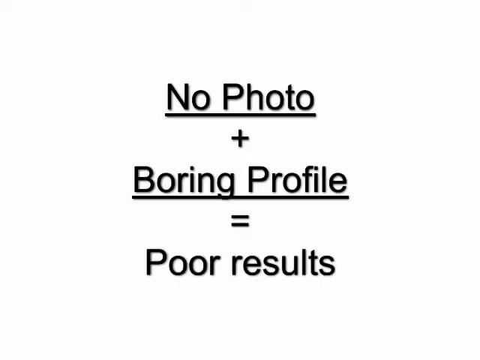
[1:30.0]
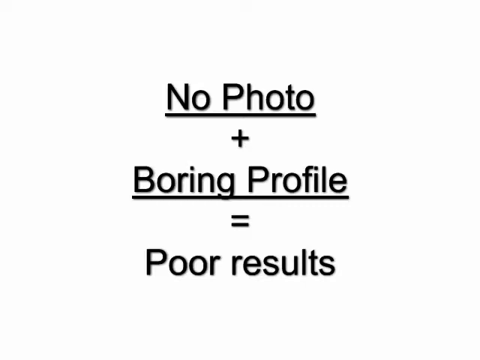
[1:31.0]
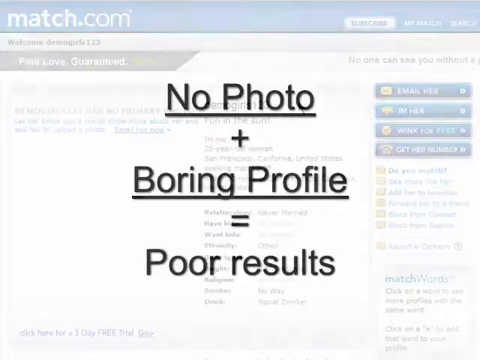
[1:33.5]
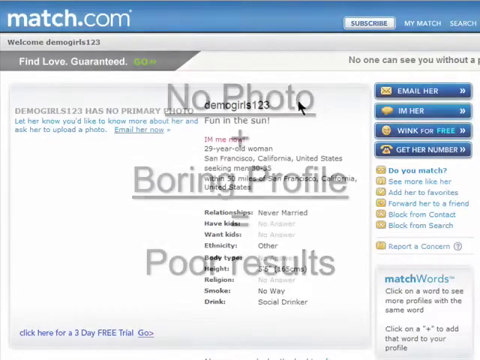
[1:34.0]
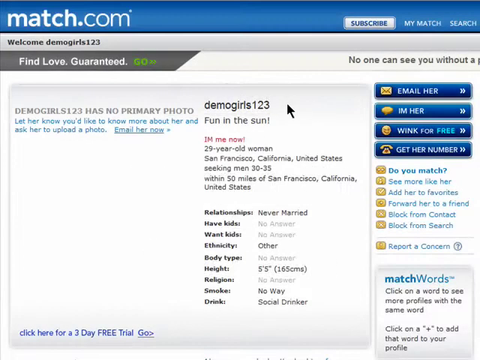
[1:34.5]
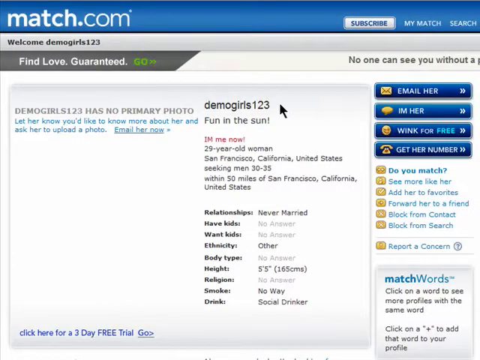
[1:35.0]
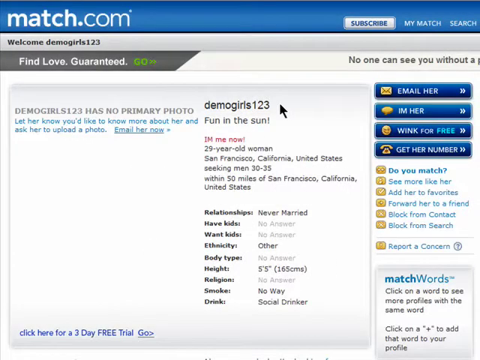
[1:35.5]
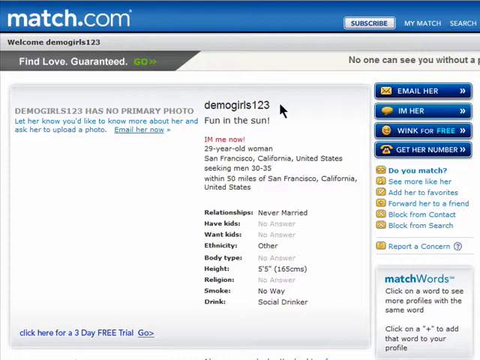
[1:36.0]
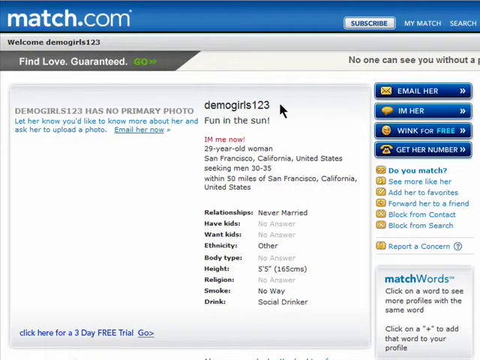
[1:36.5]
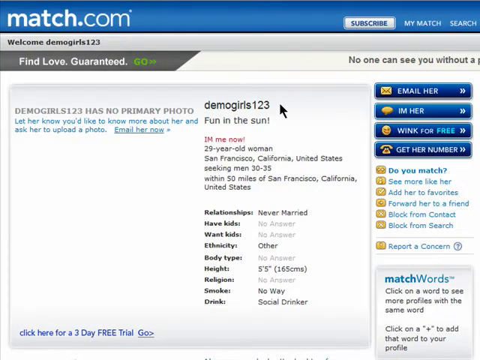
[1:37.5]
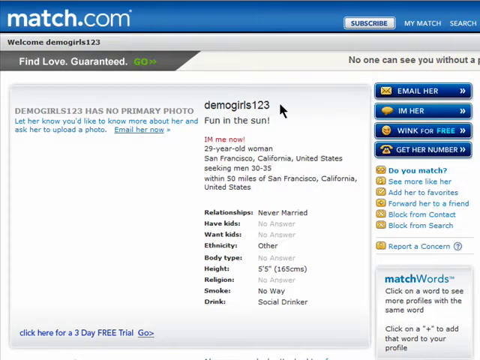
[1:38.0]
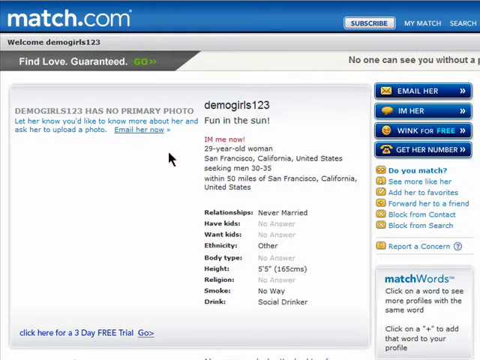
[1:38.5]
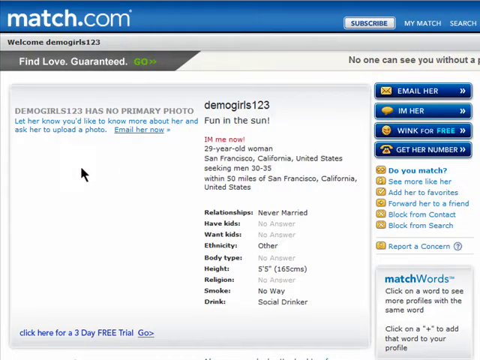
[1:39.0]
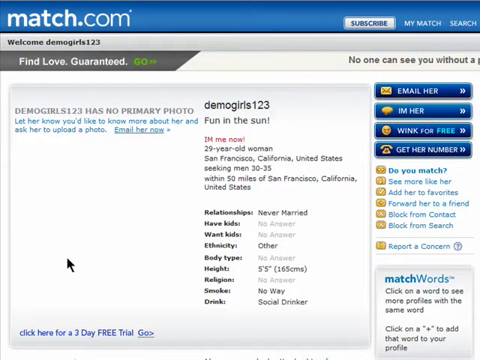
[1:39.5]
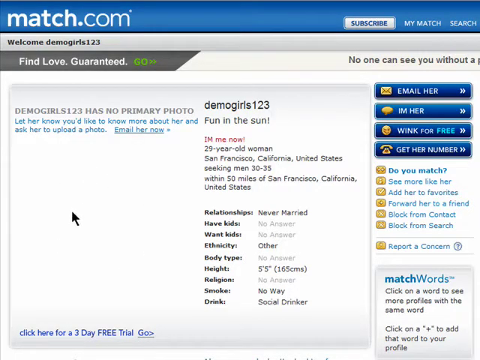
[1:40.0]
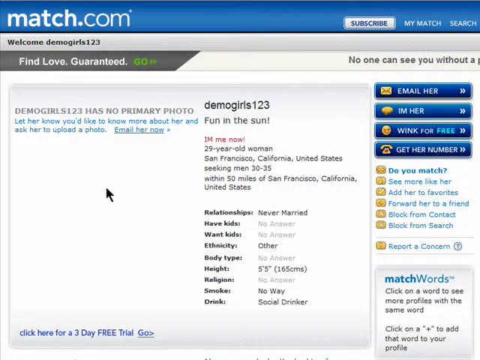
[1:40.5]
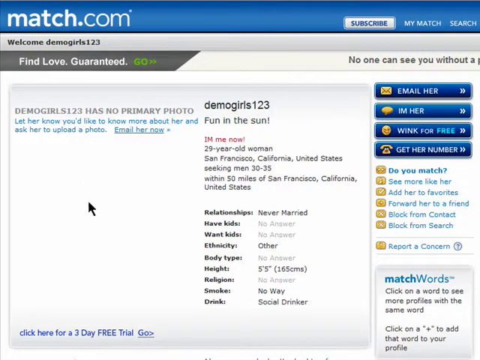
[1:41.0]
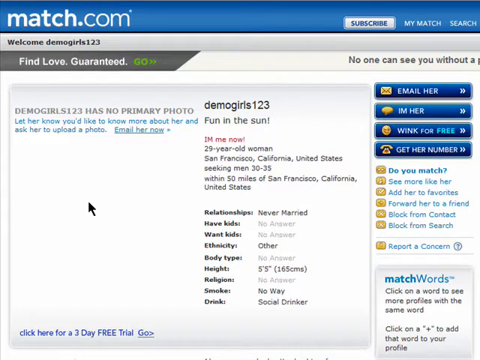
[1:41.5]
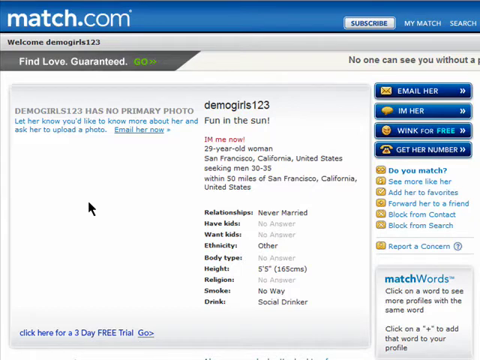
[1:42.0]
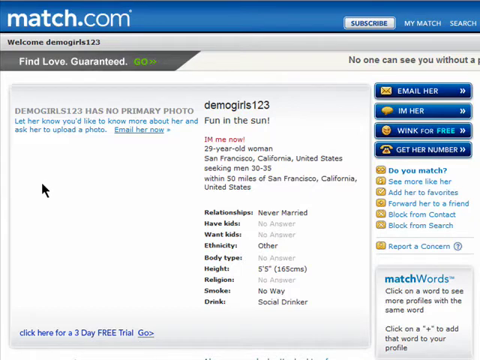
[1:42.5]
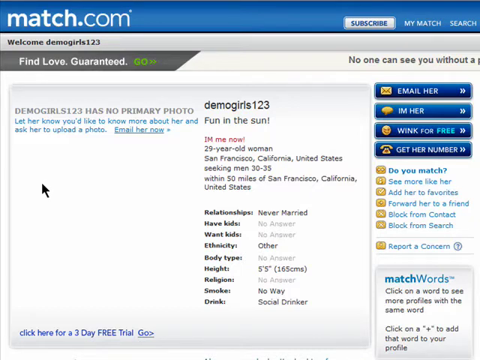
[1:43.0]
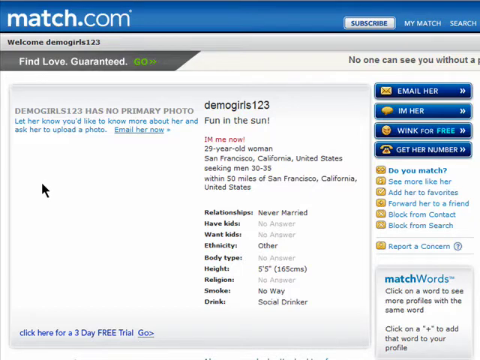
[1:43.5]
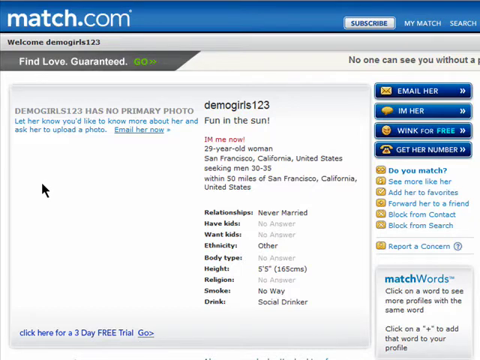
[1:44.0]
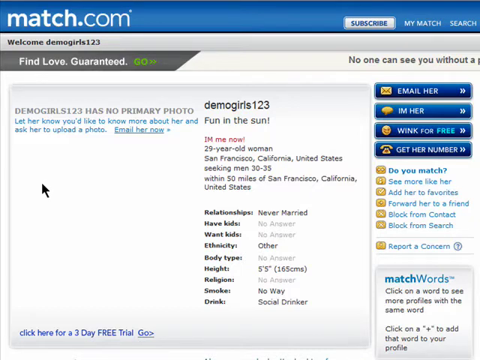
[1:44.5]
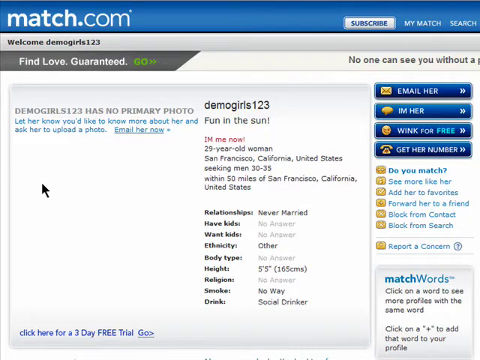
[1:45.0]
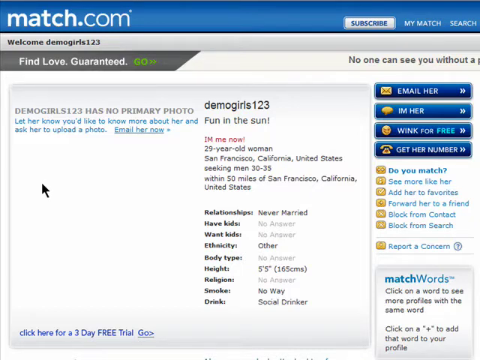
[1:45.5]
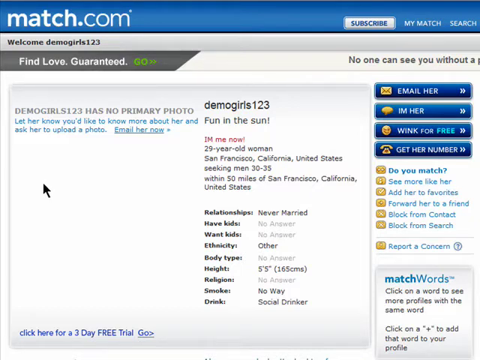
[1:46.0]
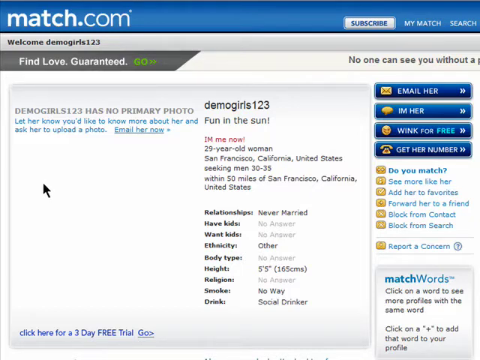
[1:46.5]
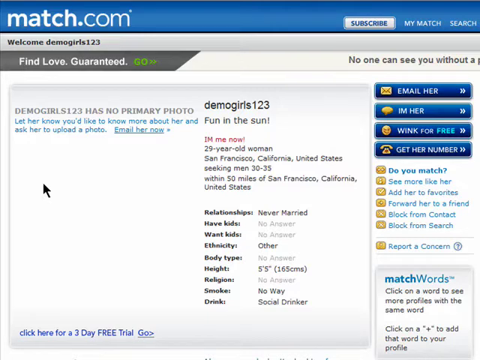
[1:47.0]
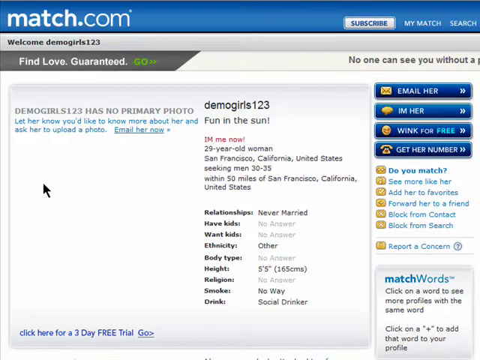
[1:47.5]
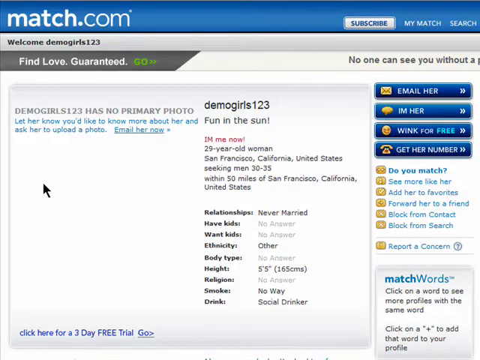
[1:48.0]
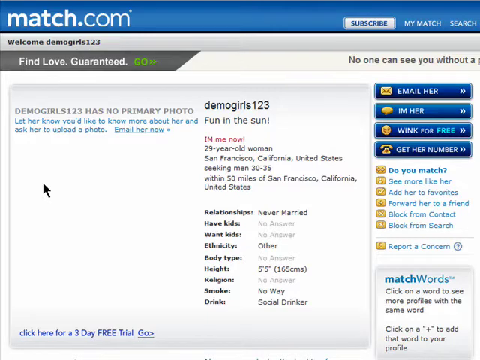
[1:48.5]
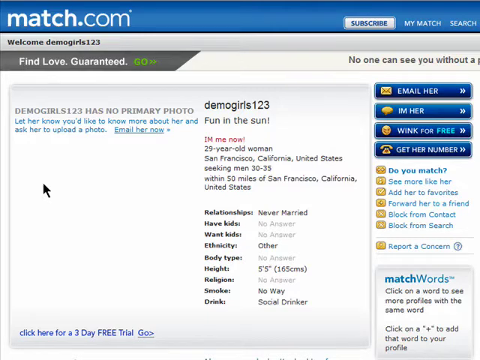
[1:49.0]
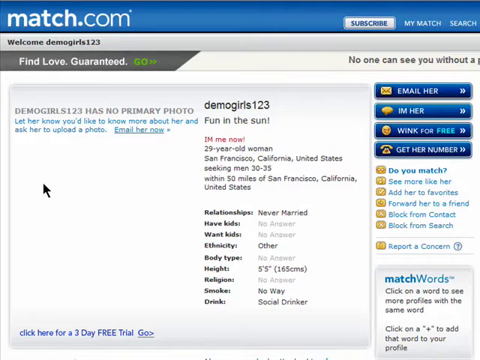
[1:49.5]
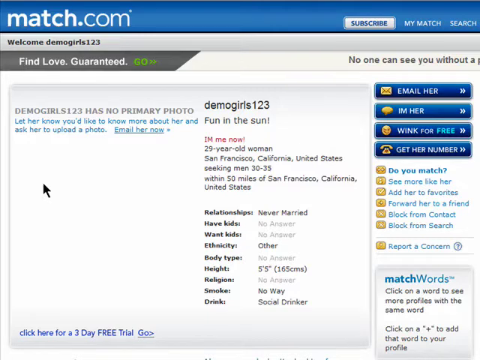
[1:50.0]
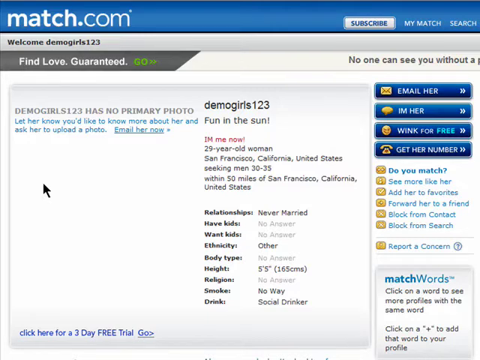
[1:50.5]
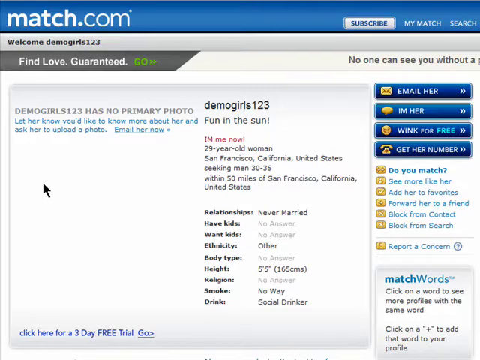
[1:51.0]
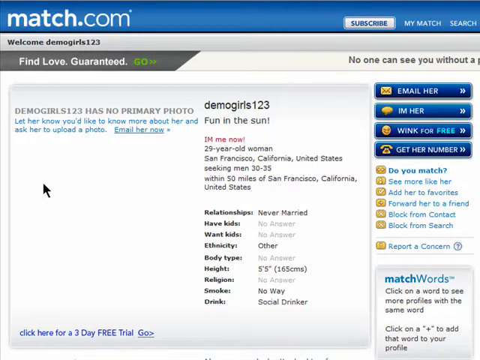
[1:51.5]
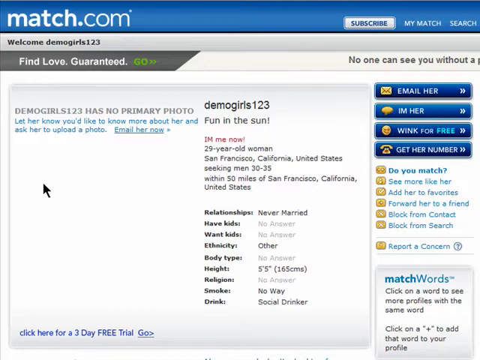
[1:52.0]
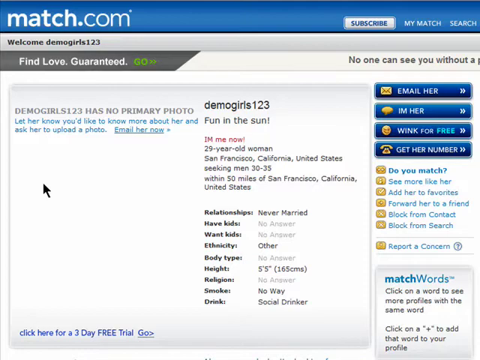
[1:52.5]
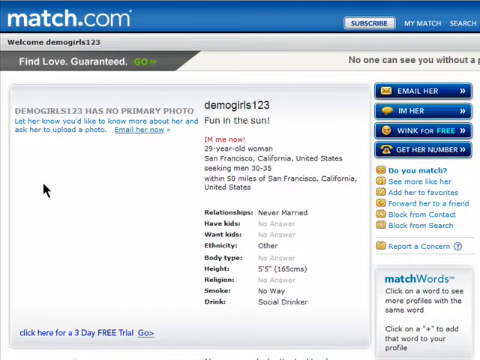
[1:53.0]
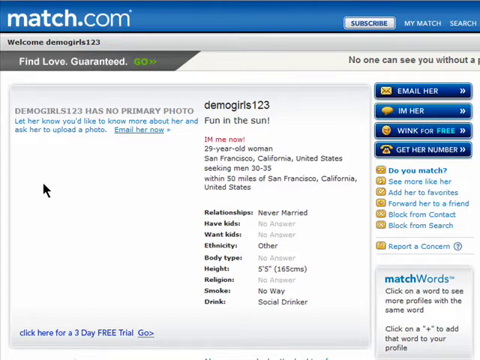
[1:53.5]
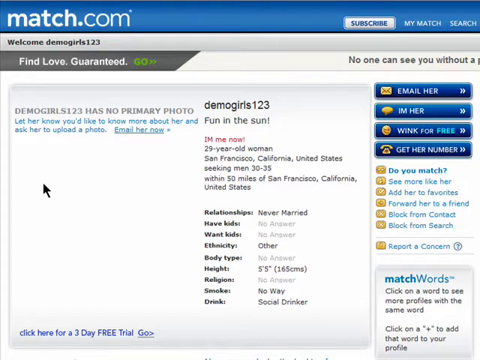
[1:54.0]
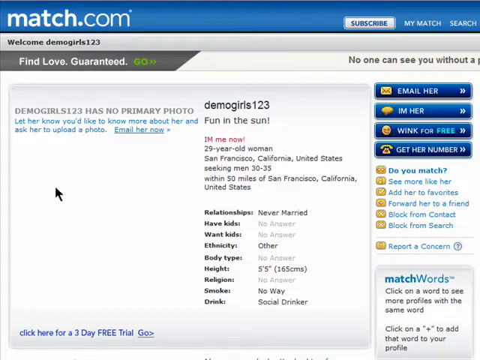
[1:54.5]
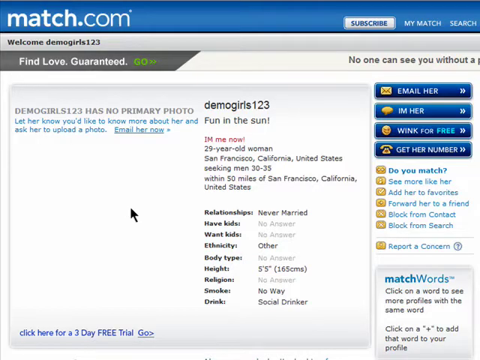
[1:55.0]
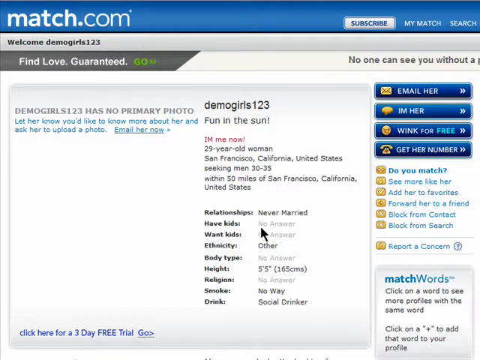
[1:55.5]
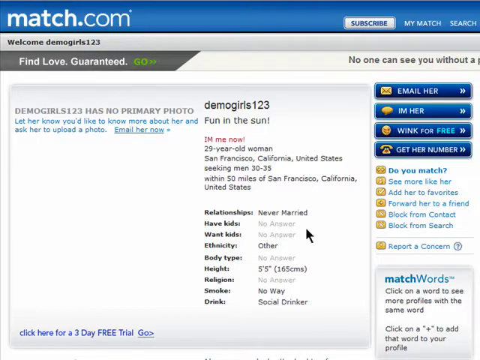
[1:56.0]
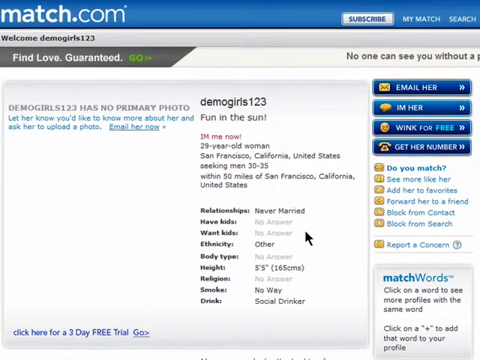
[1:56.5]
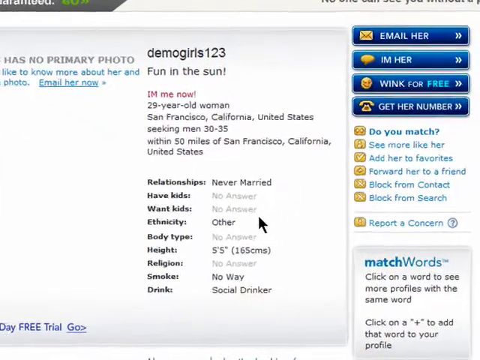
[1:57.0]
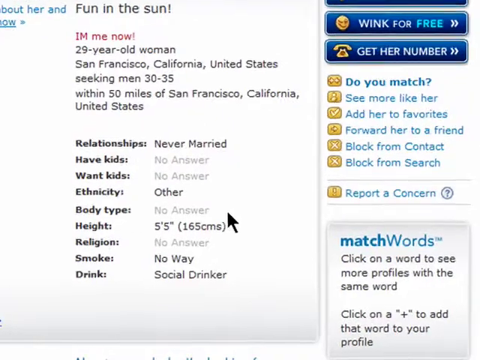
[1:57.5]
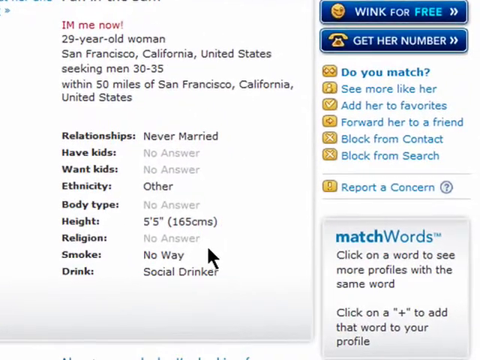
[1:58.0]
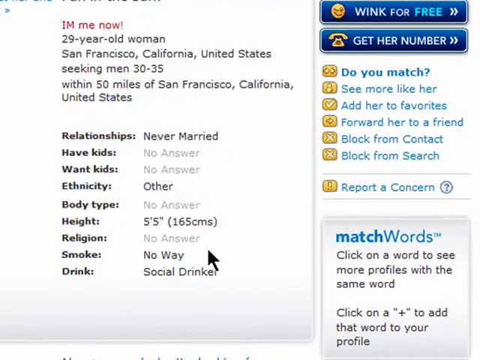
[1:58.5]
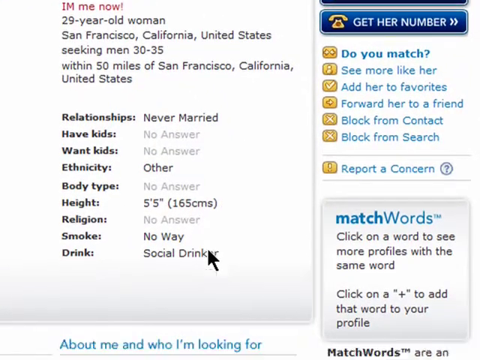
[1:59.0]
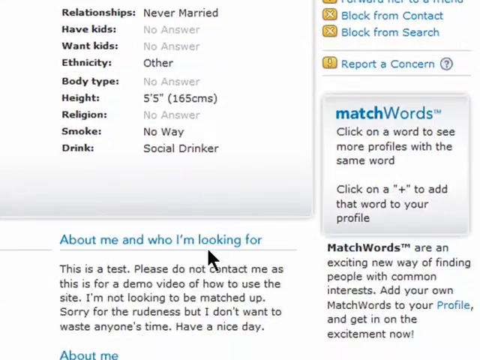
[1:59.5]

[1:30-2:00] A white background shows three lines of black text across the center, reading "no photo", "plus boring profile", "equals poor results". This fades out to a screenshot of a Match.com page with a blue match.com title bar and several links along the right. The focus is on a profile page. On the left is an area saying this user has no primary photo, and beside it is a list of basic demographics such as relationships, have kids and want kids. On the right are four blue rectangular buttons in a vertical list, reading from top to bottom "email this user", "IM the user", "wink" and "get her number". A black arrow cursor on the right-hand side of the profile moves down to the photo area and circles counterclockwise around the empty area where the photo should be, highlighting that there is no photo. It then moves to the right over the demographics. The screen zooms in on the demographics and begins to scroll down toward a section underneath.